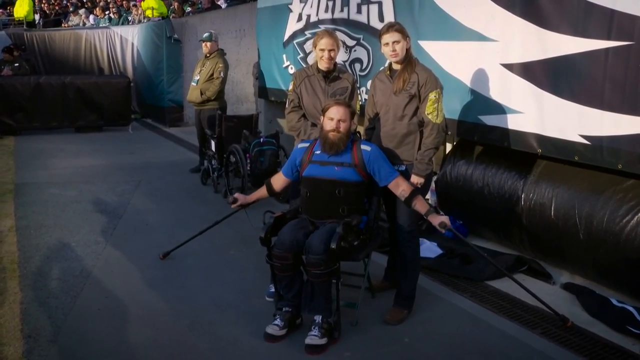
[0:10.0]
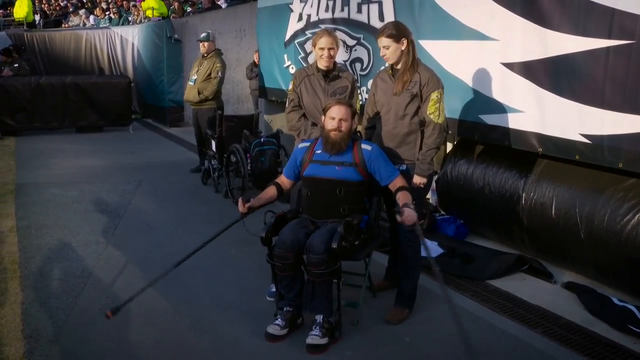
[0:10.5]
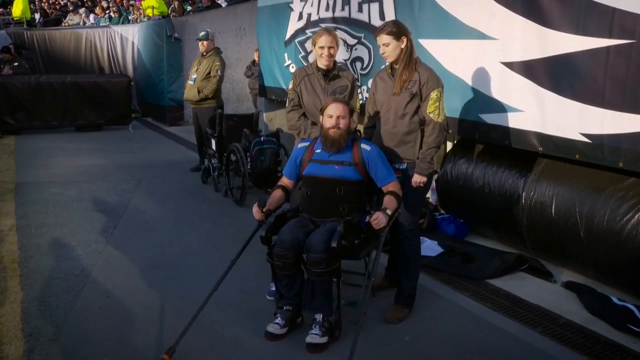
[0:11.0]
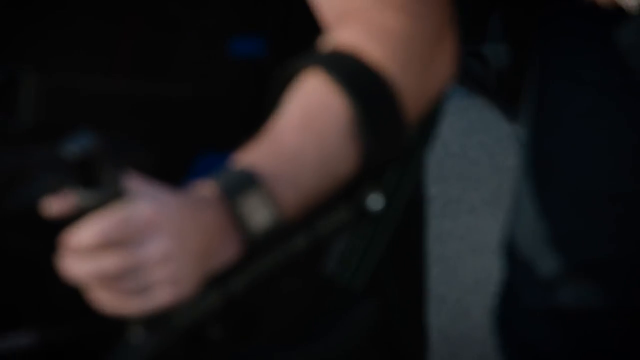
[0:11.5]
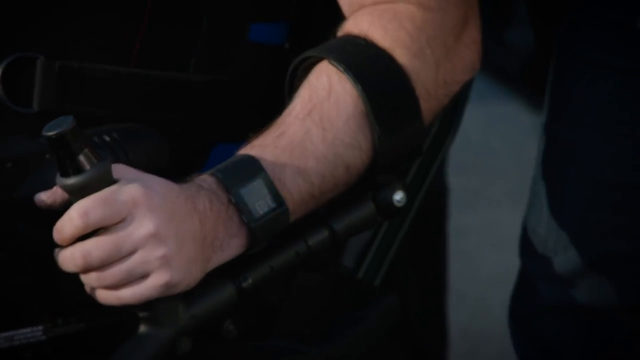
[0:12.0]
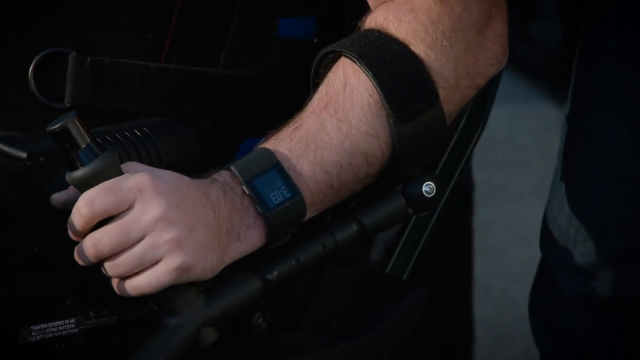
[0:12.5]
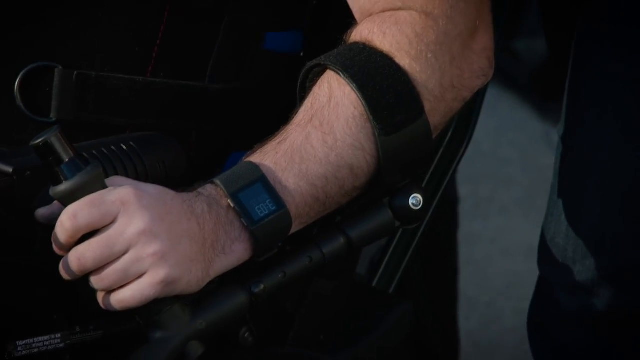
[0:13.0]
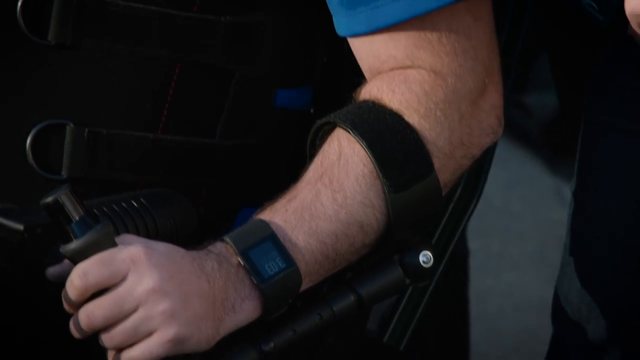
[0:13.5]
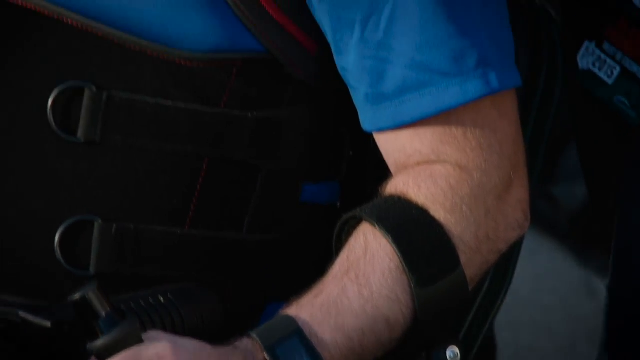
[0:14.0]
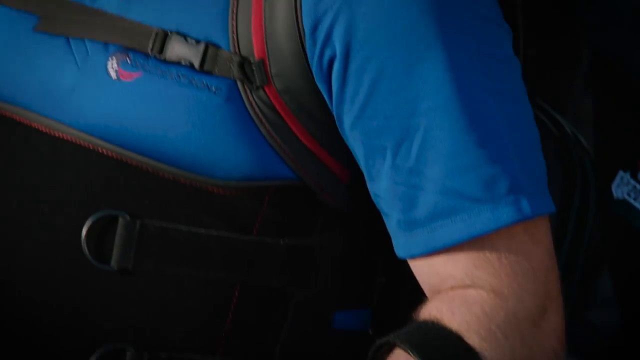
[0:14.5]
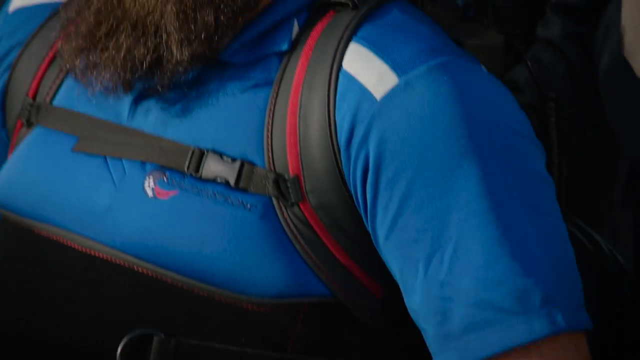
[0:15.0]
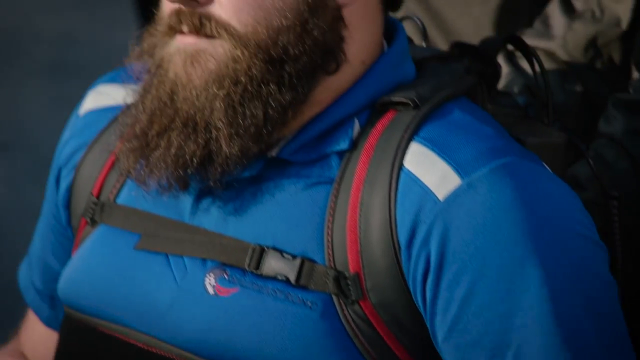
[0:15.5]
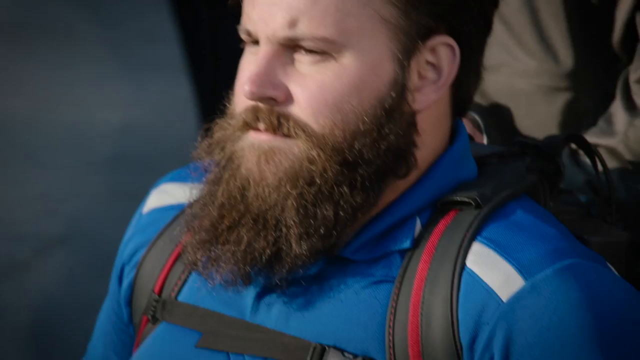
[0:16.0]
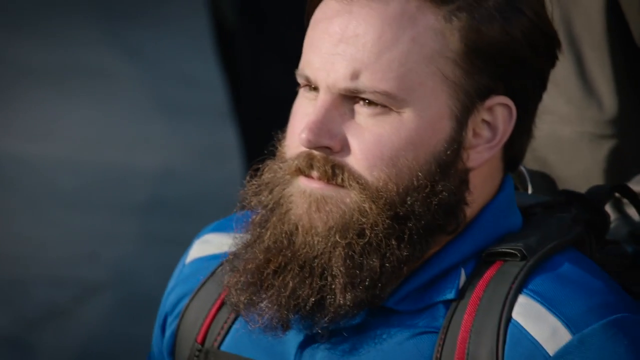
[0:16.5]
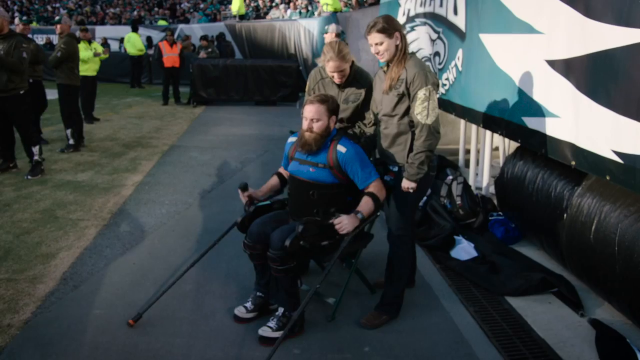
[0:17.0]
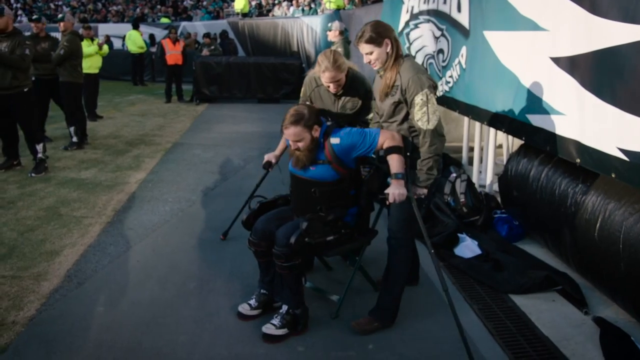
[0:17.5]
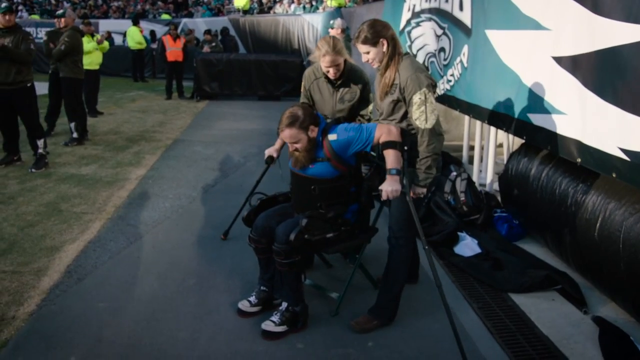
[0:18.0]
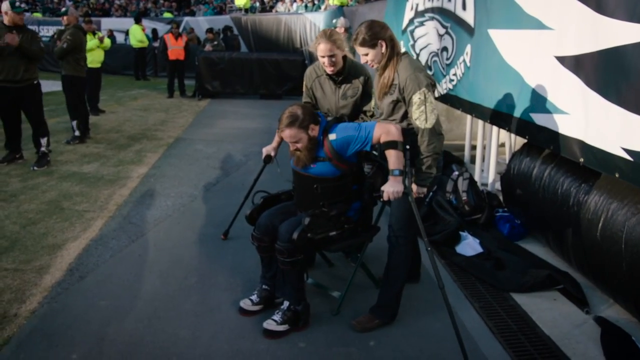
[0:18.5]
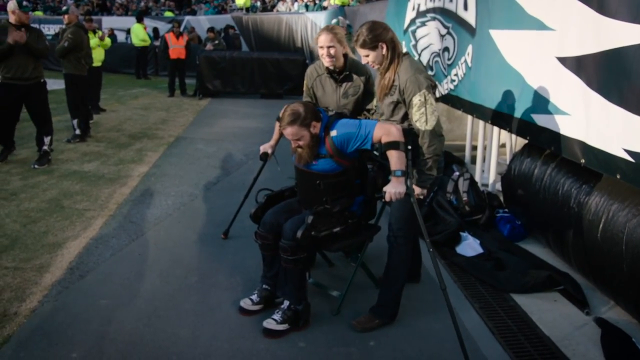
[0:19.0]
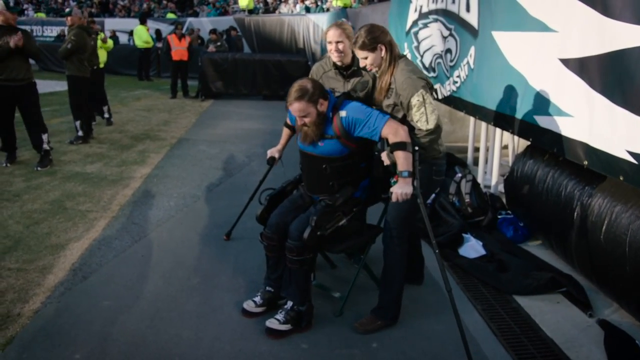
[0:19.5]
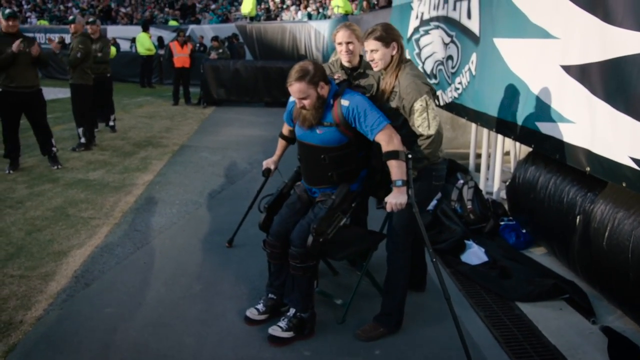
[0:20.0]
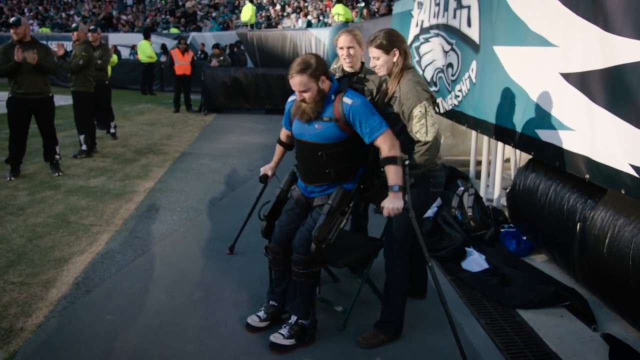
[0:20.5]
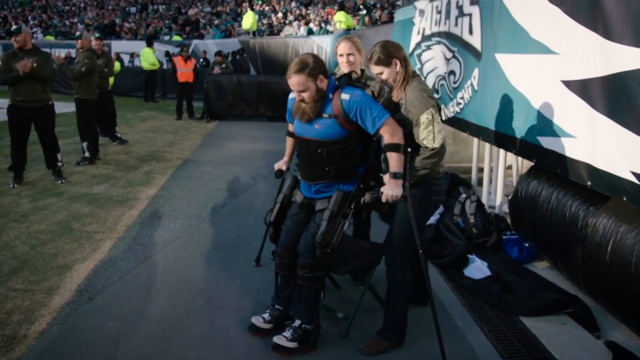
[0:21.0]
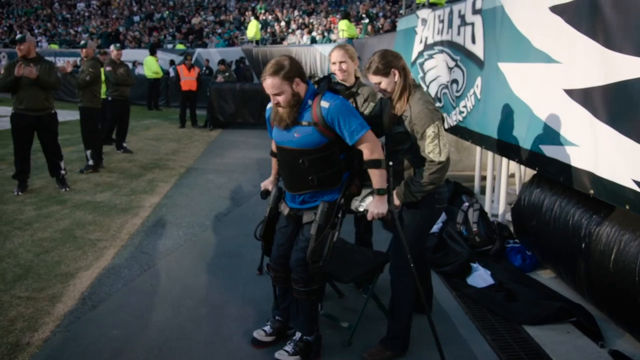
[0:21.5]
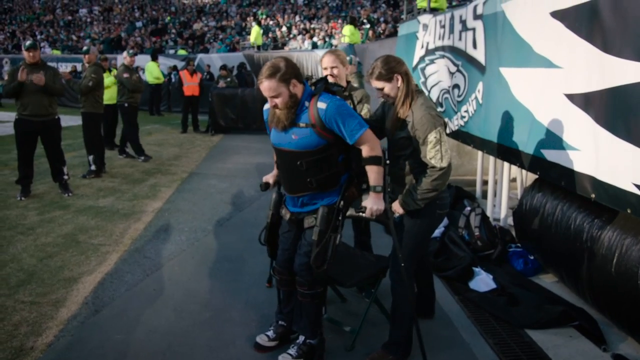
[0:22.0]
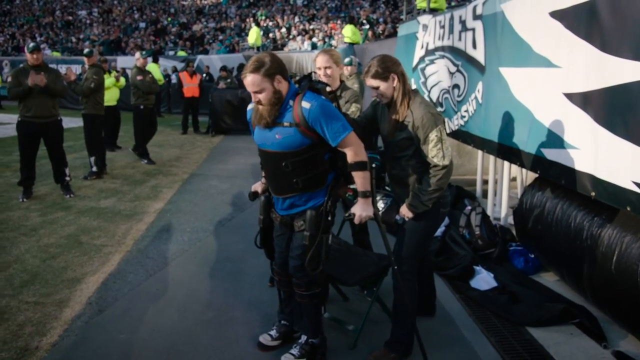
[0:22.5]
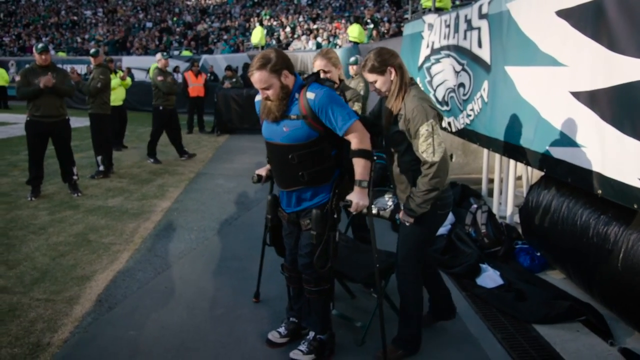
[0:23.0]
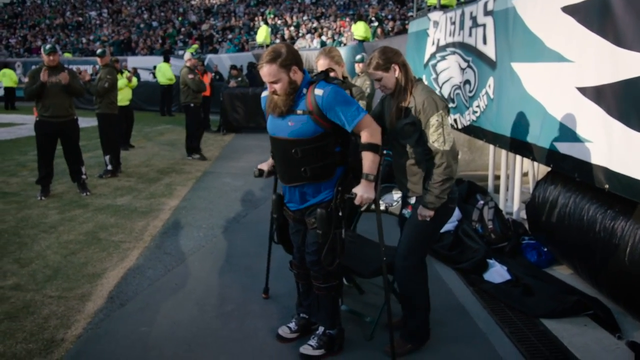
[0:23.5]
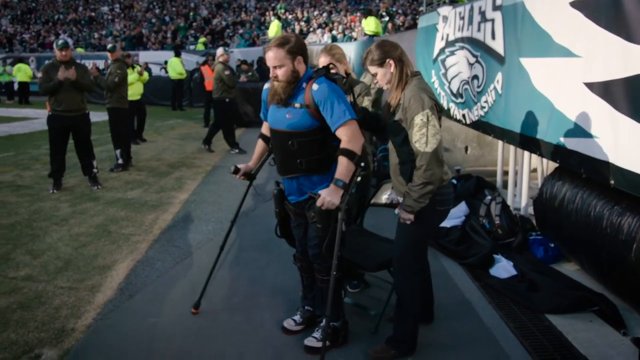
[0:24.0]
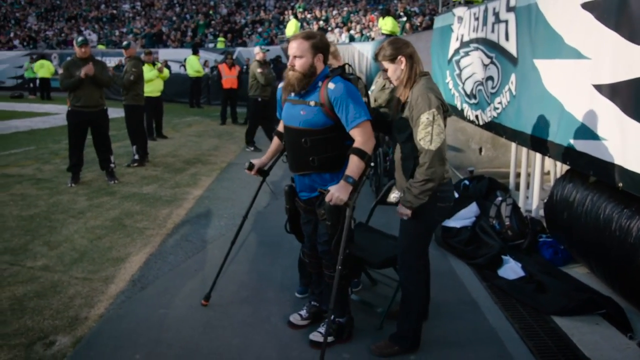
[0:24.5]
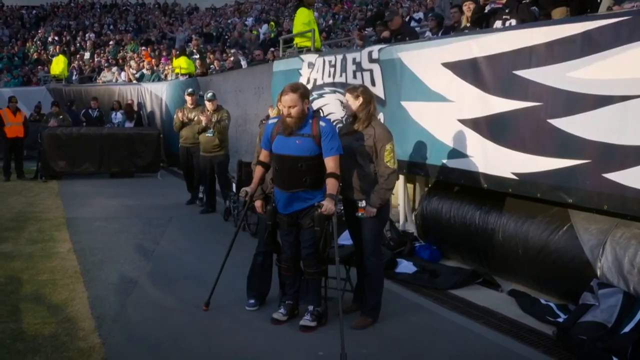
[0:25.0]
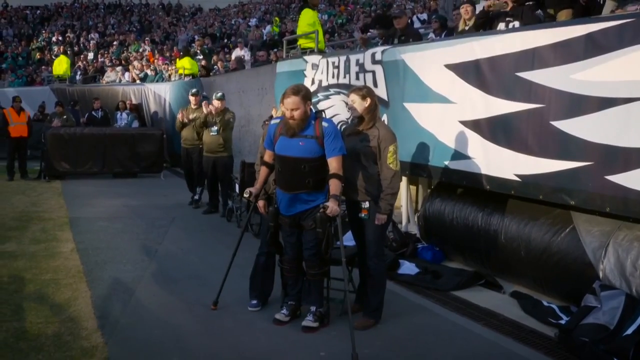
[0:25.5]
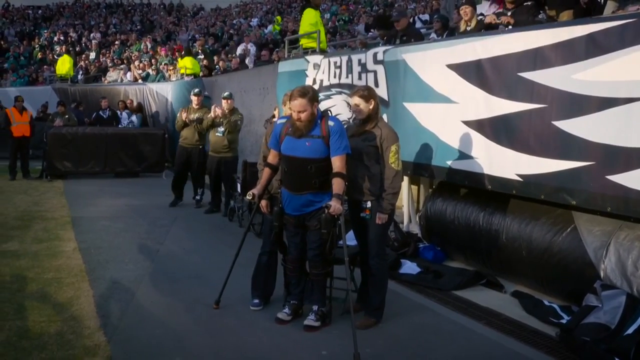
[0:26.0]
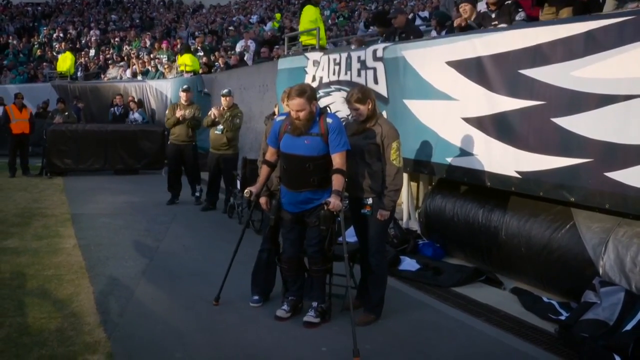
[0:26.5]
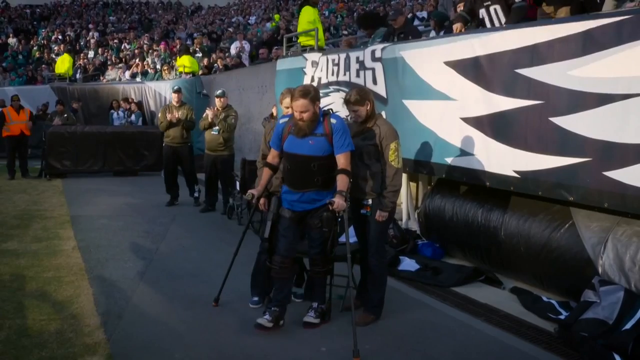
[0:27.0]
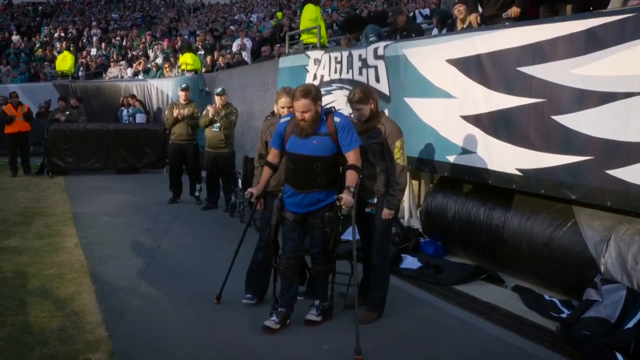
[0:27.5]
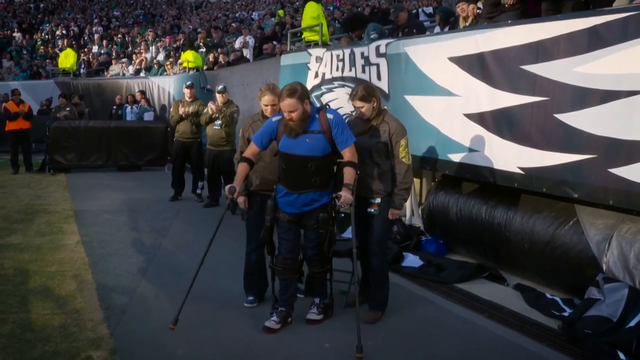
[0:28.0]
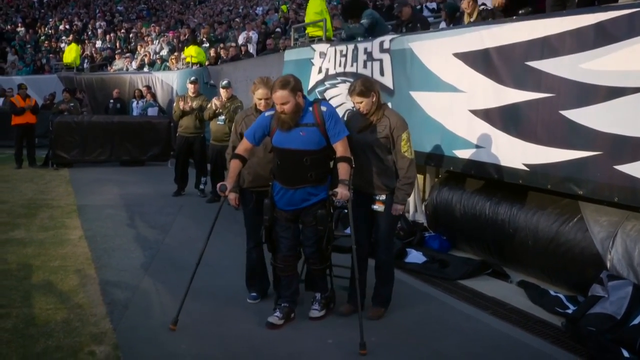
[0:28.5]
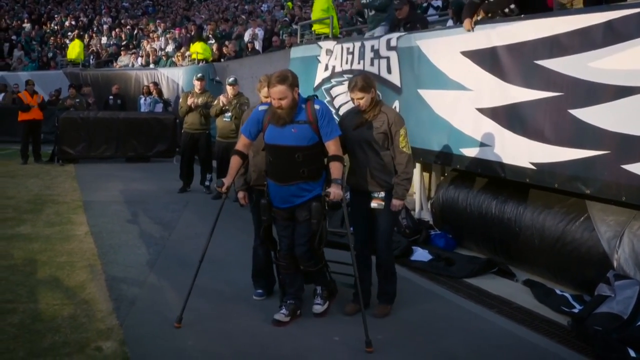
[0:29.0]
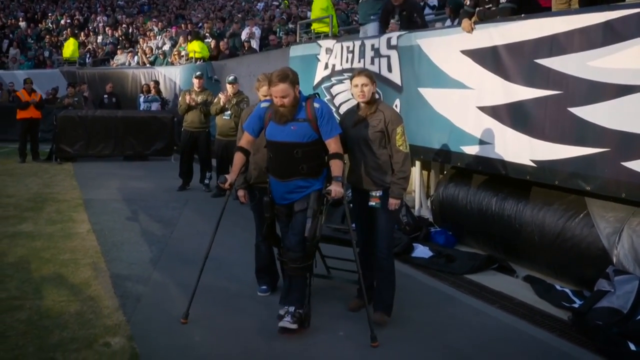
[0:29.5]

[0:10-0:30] A man in a blue shirt and dark blue jeans sits in a wheelchair with a cane in each hand. He has brown hair and a big, bushy brown beard. Two women in brown jackets with yellow accents are standing behind him. He brings the canes from his side closer to the arms of the wheelchair. The camera zooms in toward his body and slowly pans up to his face. He begins to stand up out of the wheelchair with the help of the woman behind him. Men in green hoodies and black pants start clapping, and the crowd of fans behind him stands up, applauding. Everyone around him is clapping.